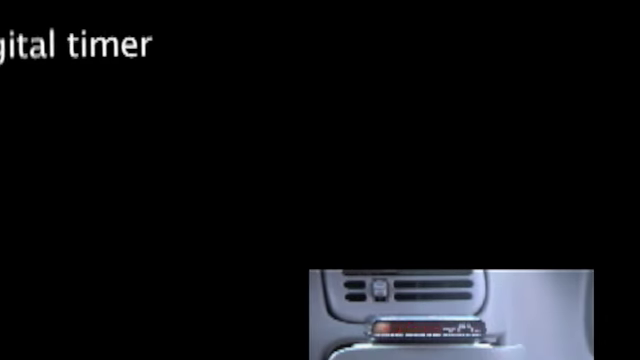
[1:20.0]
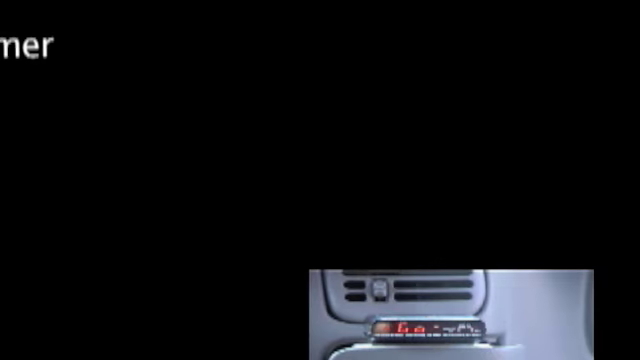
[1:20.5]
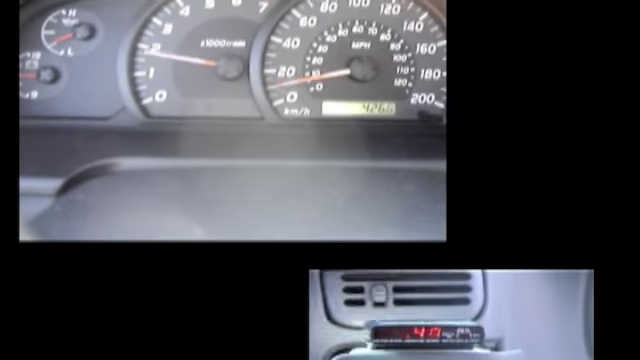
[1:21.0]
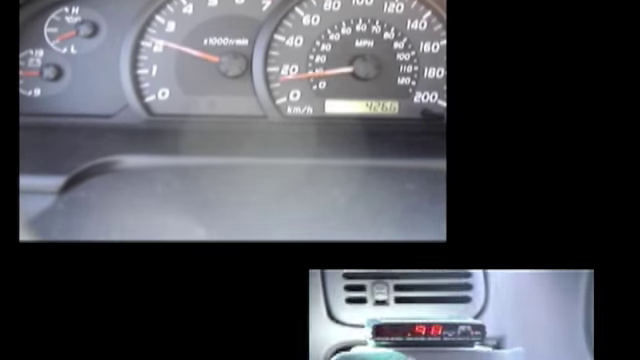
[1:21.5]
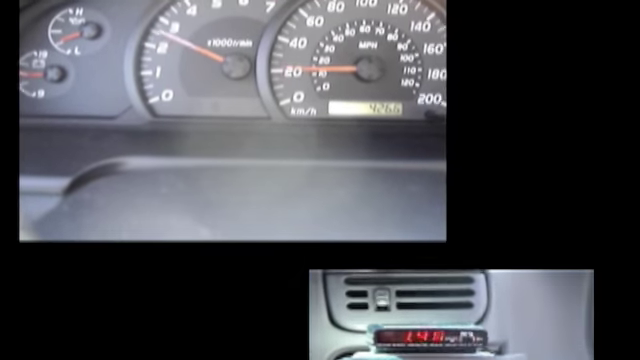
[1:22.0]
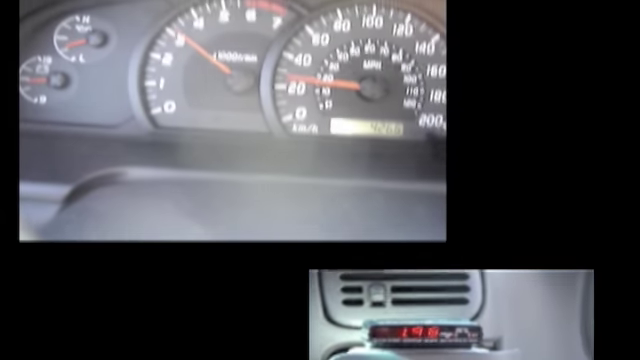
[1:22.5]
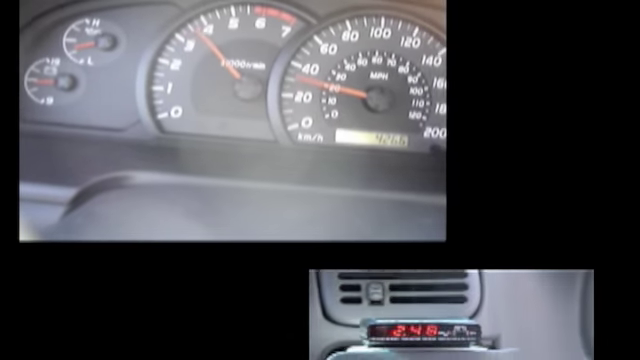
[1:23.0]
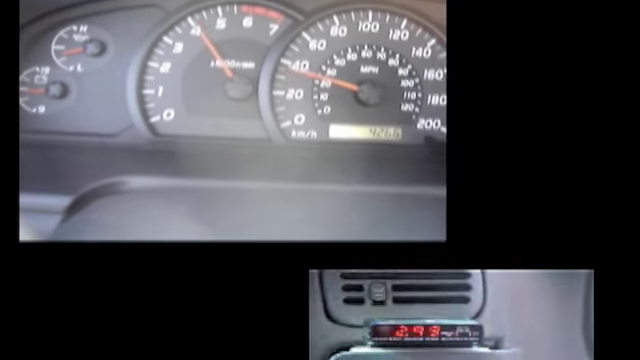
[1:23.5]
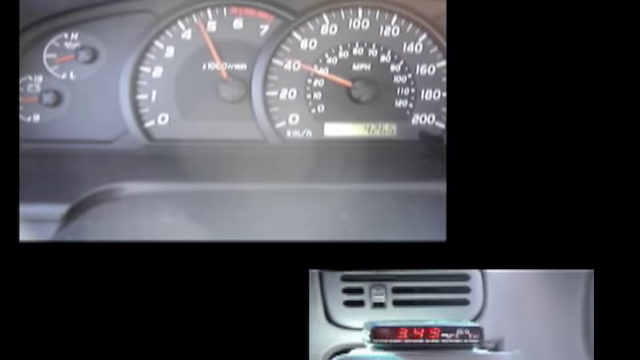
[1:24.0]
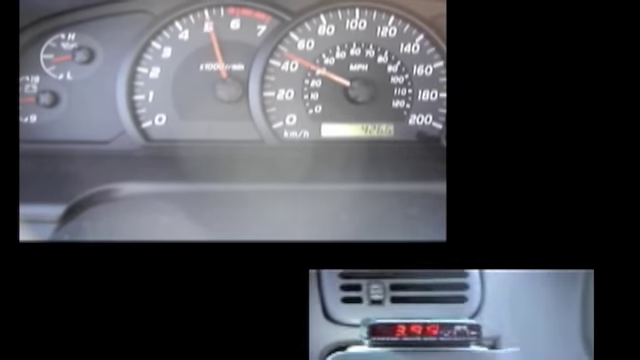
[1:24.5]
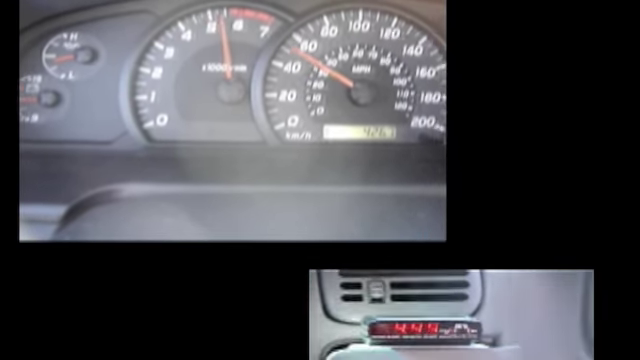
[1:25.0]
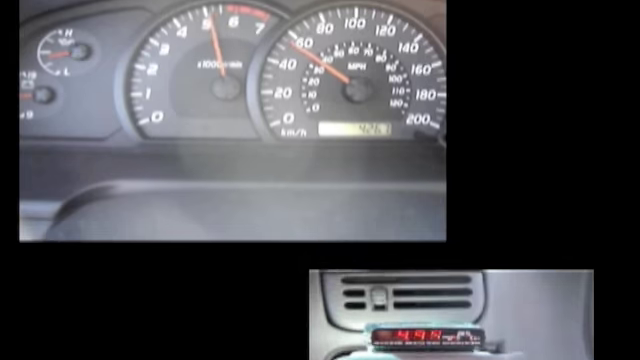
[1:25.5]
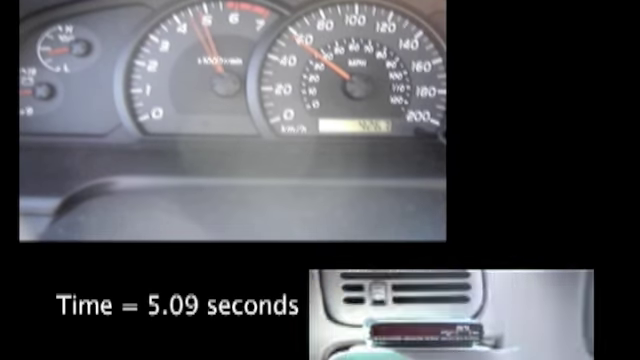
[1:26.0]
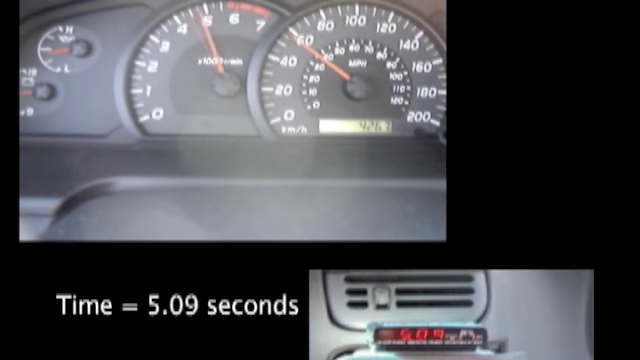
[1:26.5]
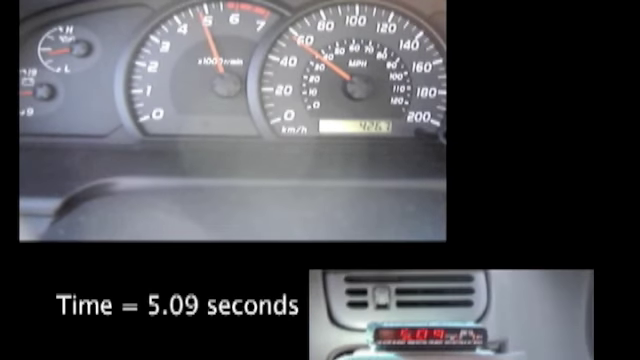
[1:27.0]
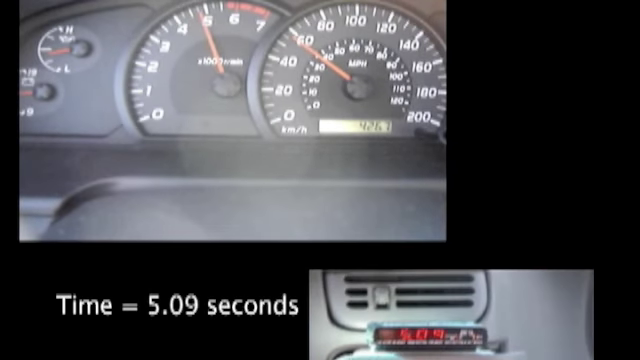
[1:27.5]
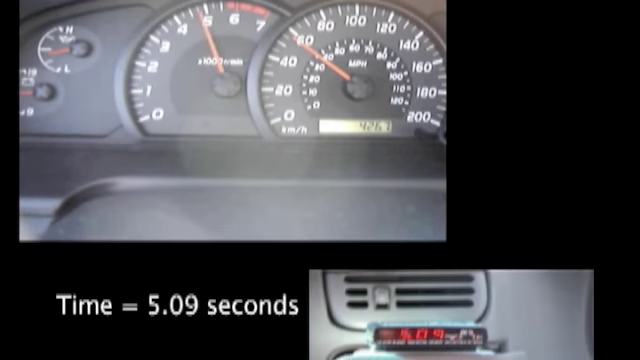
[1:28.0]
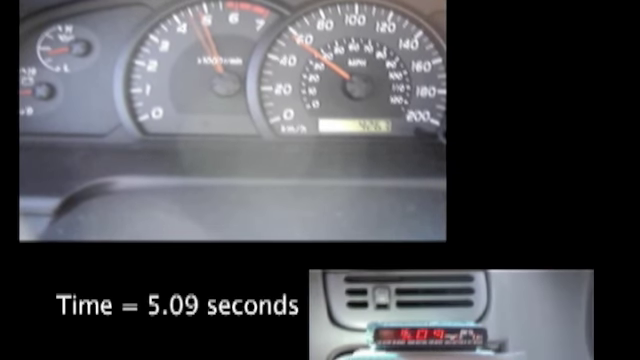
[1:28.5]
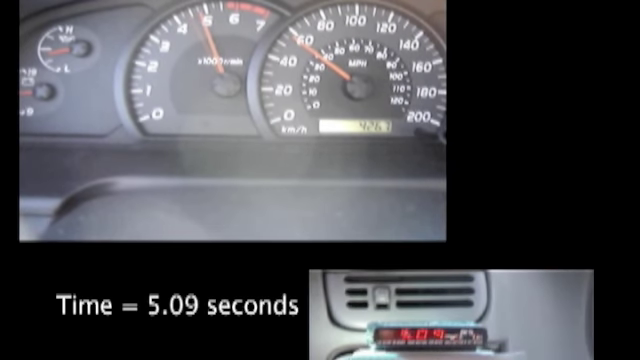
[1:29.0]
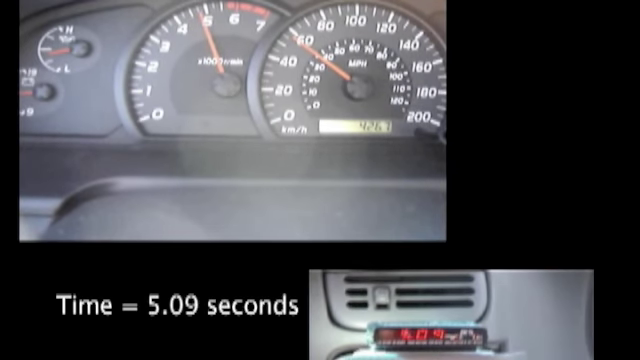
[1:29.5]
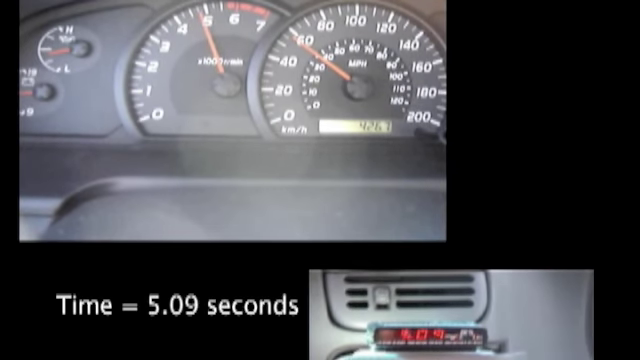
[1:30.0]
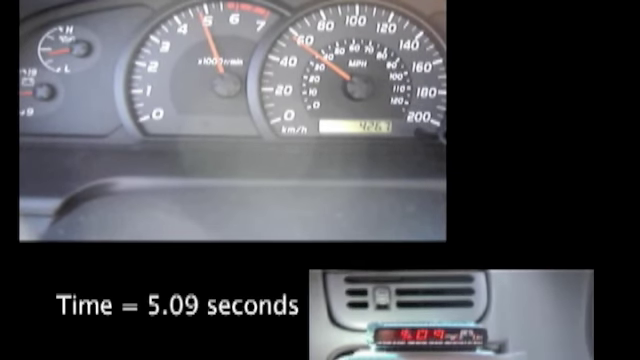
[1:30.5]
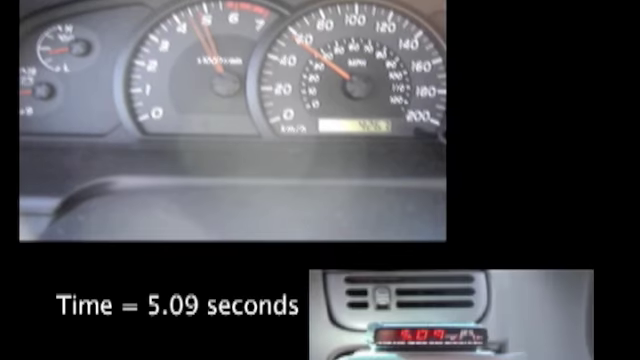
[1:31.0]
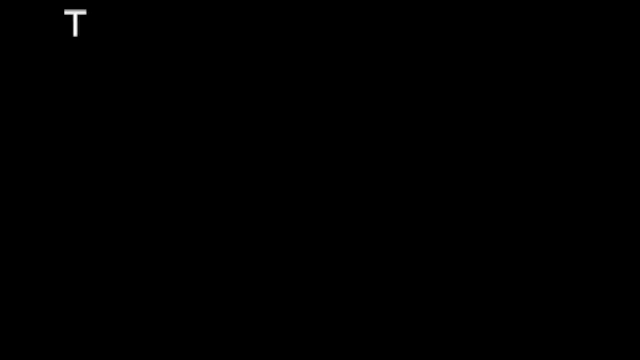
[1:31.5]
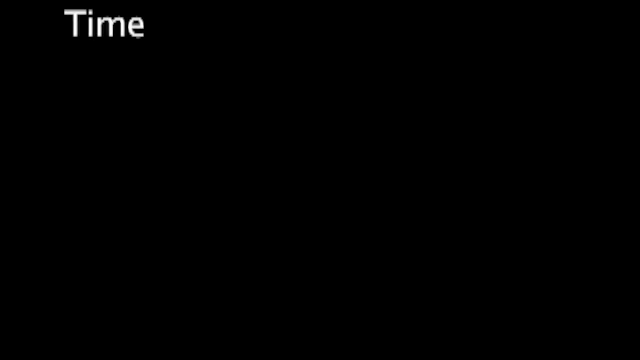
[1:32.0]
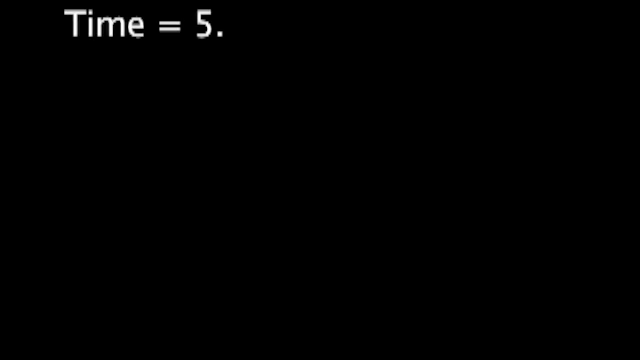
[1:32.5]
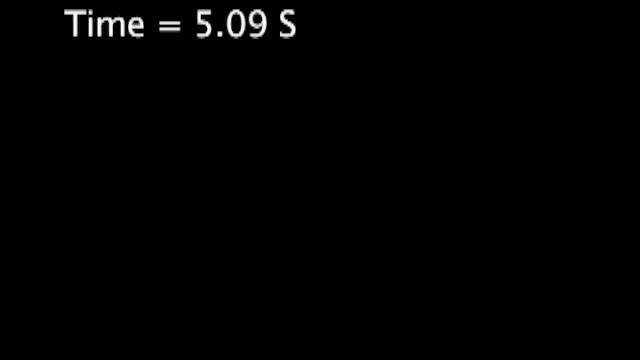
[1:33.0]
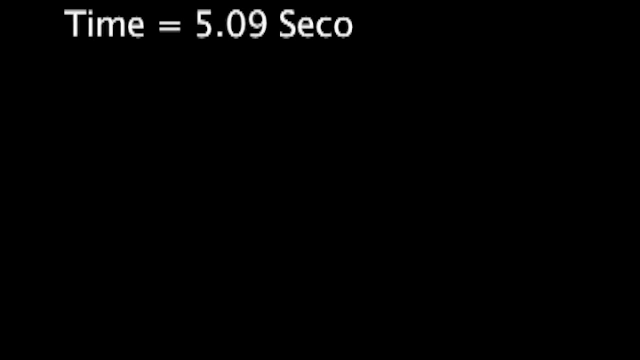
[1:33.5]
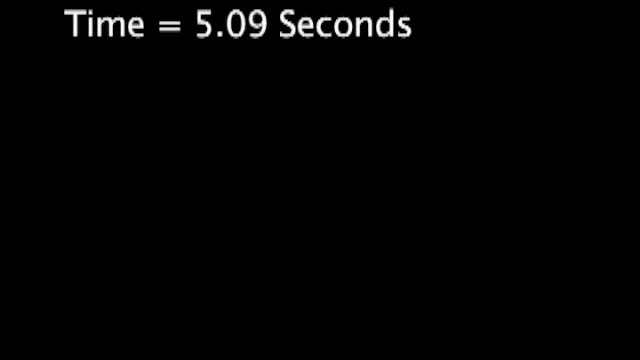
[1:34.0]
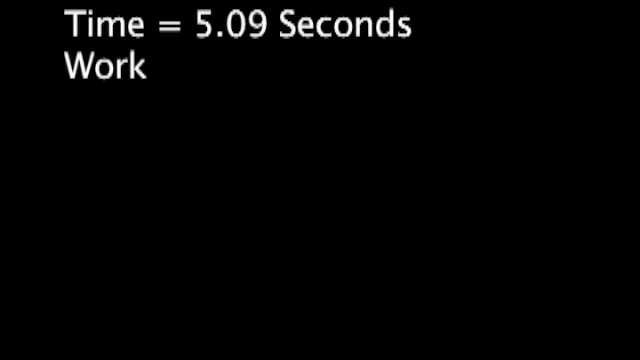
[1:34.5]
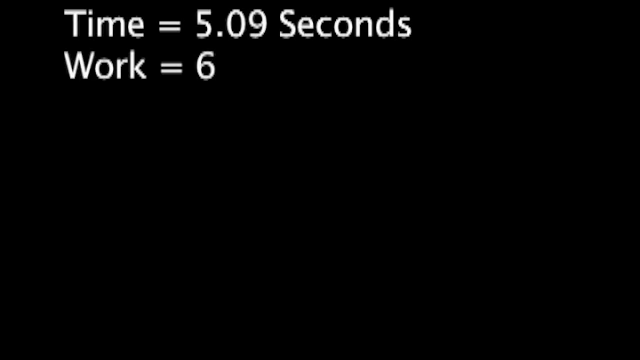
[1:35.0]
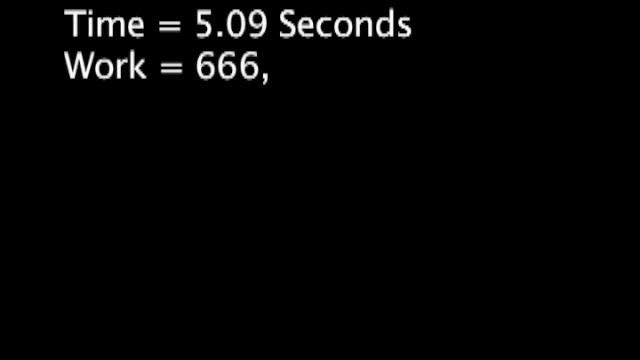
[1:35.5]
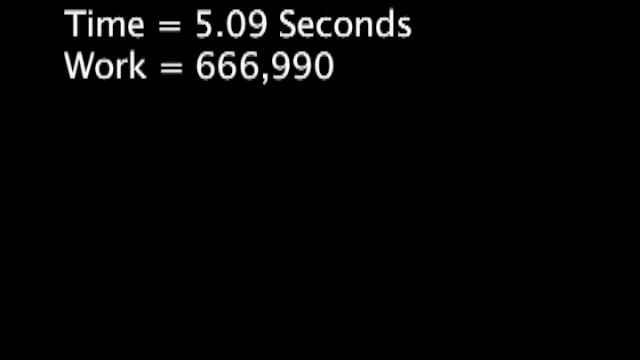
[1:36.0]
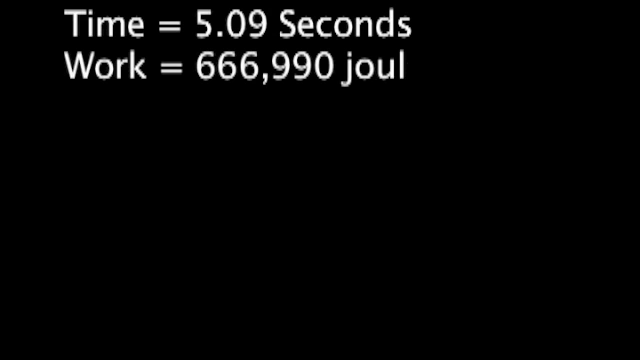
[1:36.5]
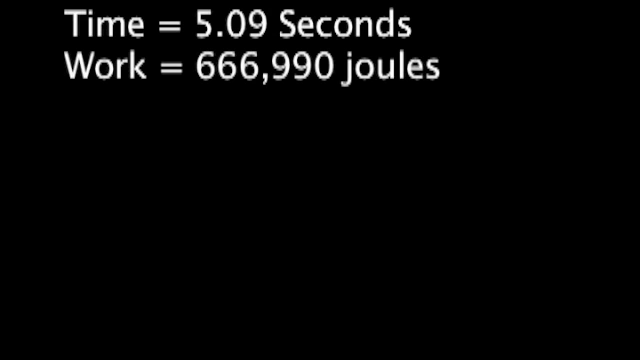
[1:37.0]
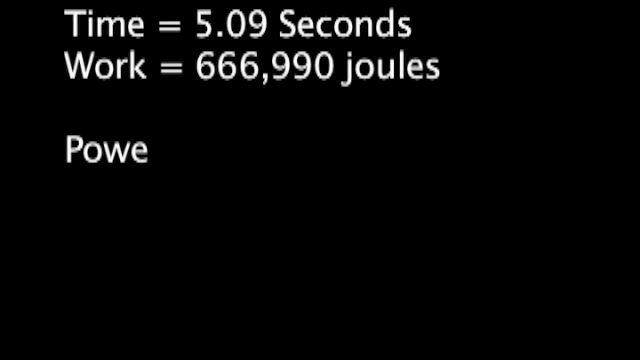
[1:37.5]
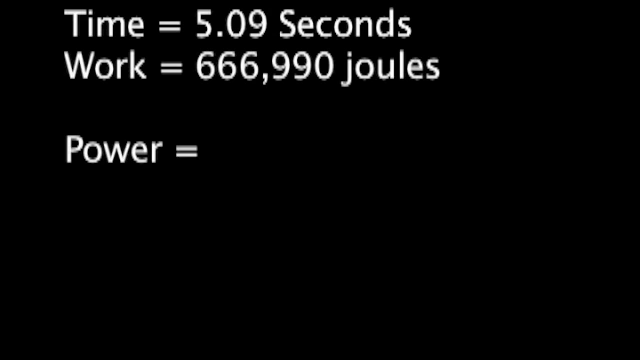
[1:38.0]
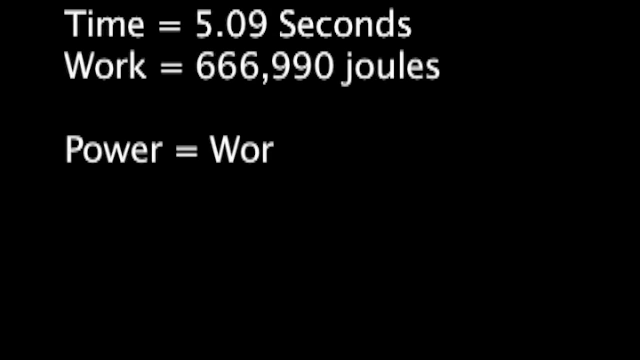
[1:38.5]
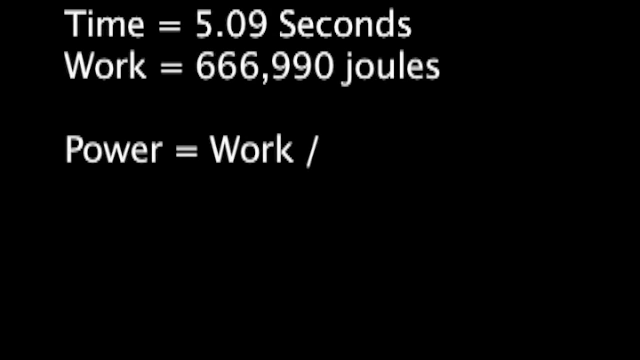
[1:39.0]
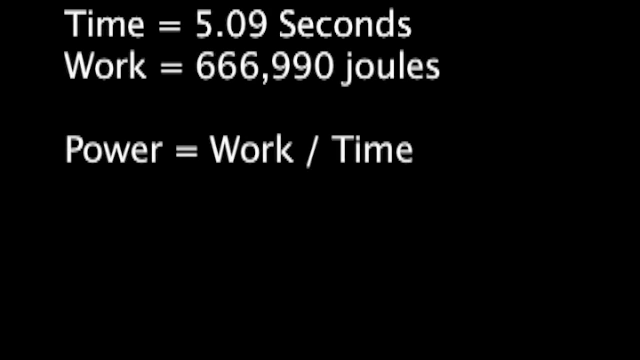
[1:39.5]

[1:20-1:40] The banner is exiting the screen, and the car's AC vent is visible in a small rectangular video in the bottom right. A bigger video then takes up most of the black screen, apparently showing the speedometer and other gauges on a vehicle's front dash. The car's speed increases, along with the RPM gauge beside it. A little orange dial reaches a peak of 5 on the RPMs, and the speedometer peaks at almost 60 mph. A gauge showing whether the car is overheating is also visible. "time = 5.09 seconds" pops up in the bottom left of the screen. A black page then appears, and someone types "time = 5.09 seconds," then "work = 666990 joules," and below that "power = work/time."